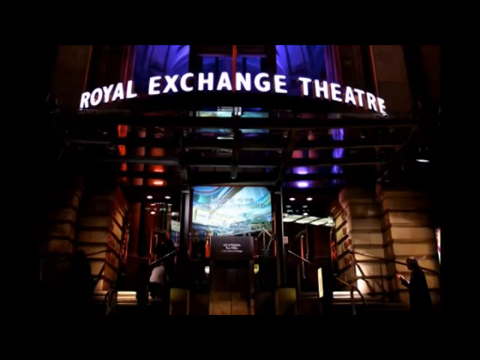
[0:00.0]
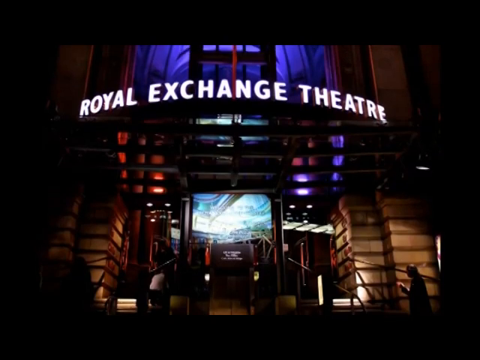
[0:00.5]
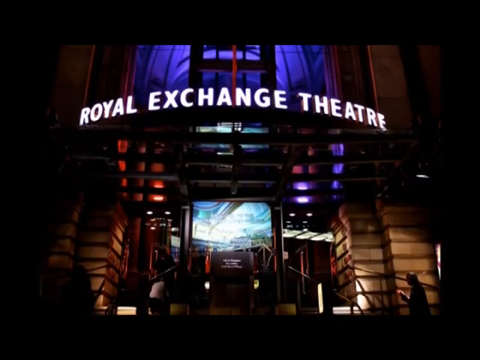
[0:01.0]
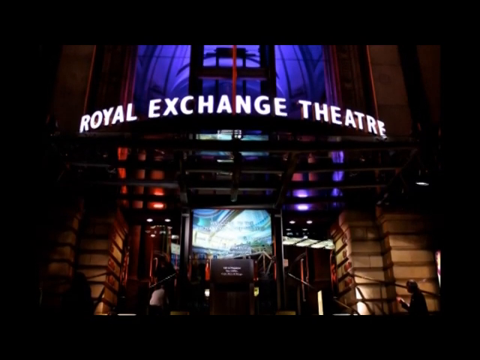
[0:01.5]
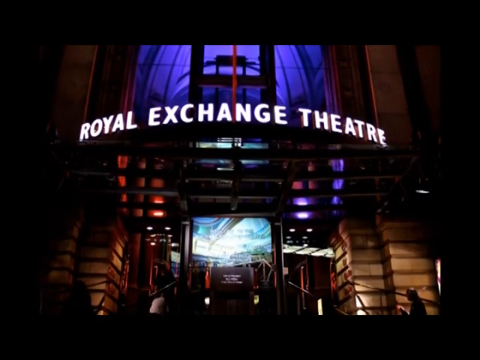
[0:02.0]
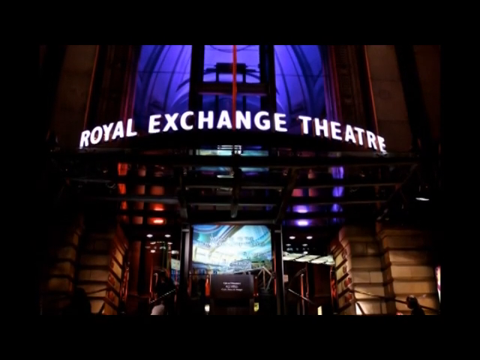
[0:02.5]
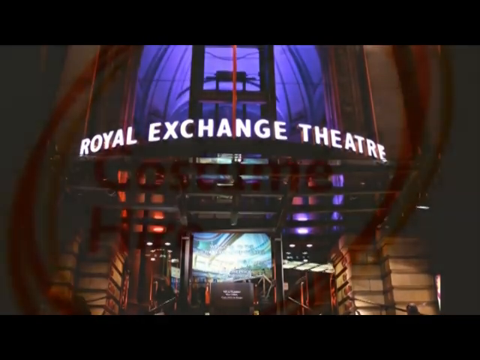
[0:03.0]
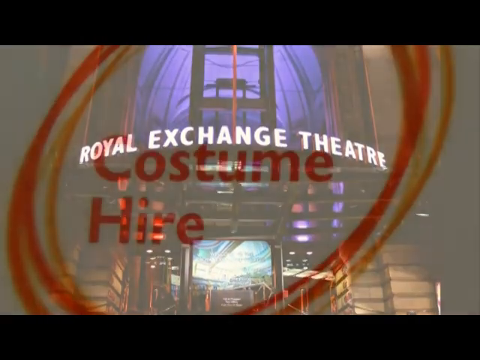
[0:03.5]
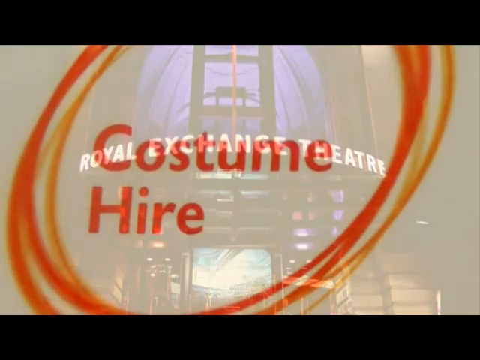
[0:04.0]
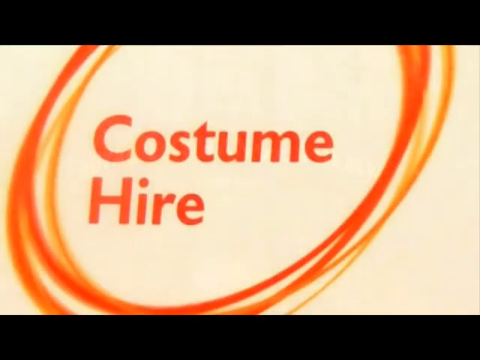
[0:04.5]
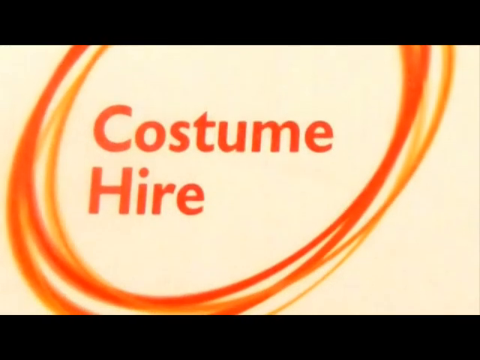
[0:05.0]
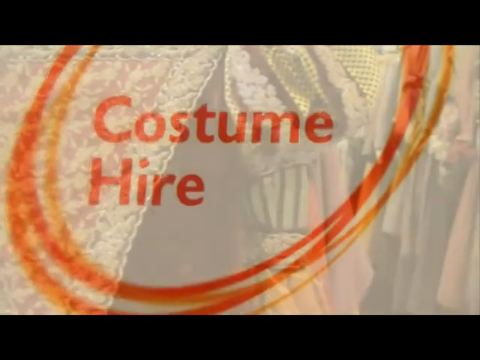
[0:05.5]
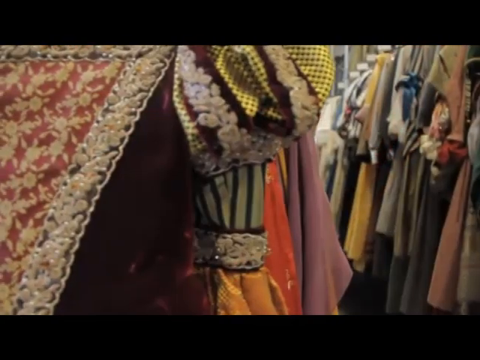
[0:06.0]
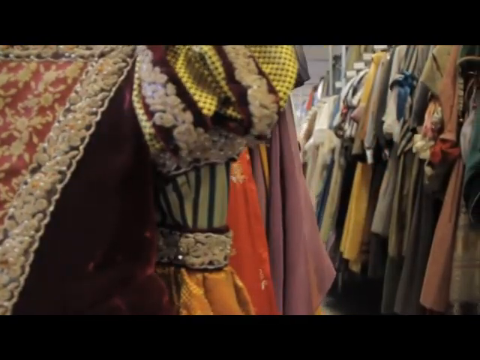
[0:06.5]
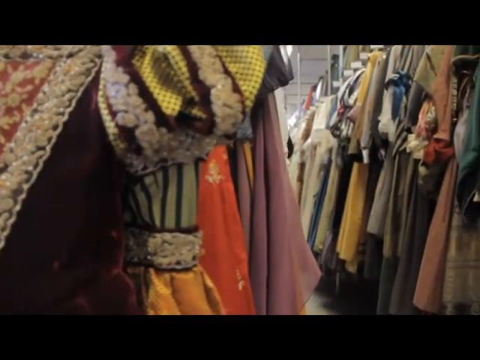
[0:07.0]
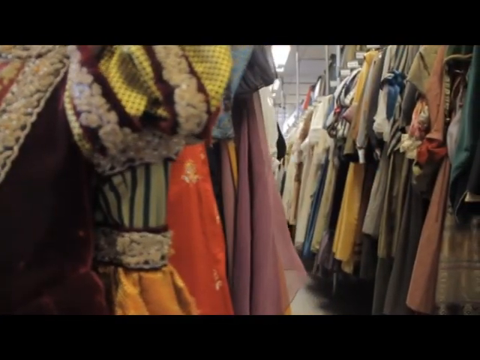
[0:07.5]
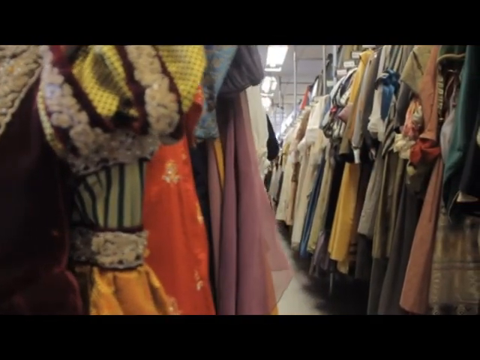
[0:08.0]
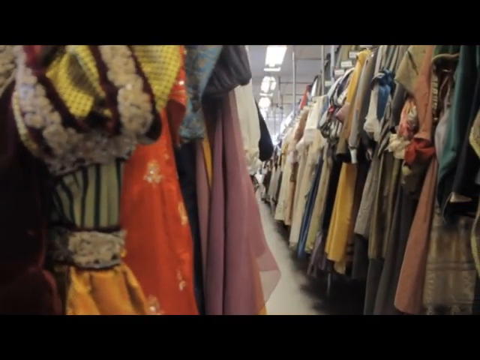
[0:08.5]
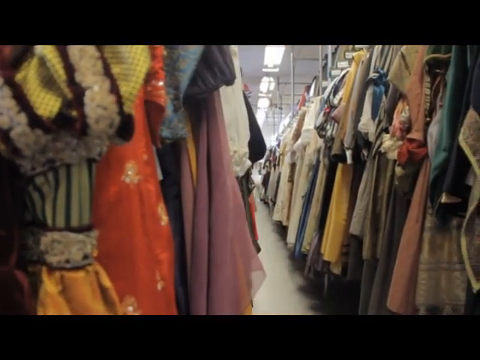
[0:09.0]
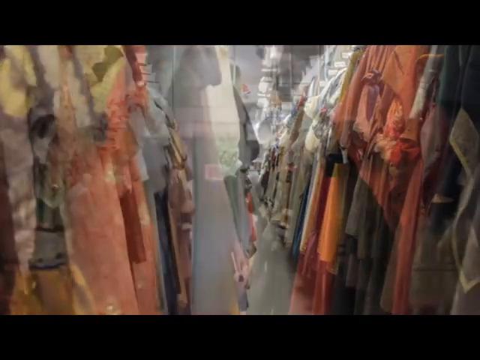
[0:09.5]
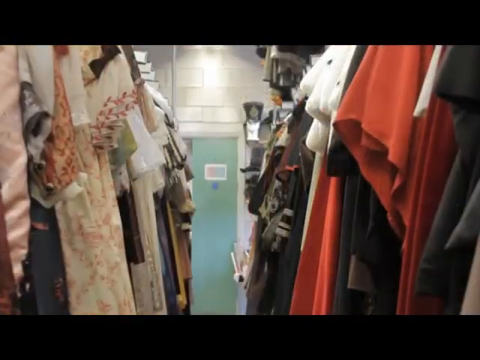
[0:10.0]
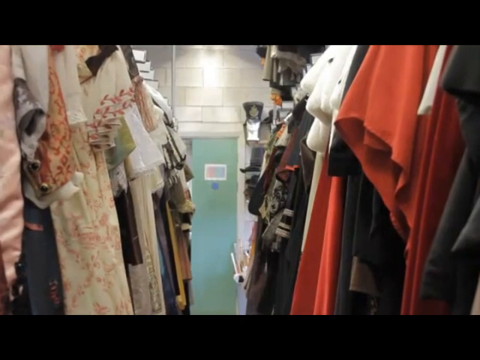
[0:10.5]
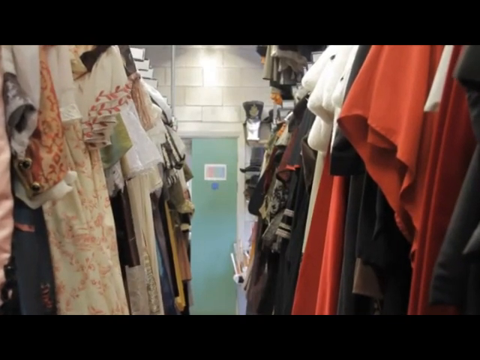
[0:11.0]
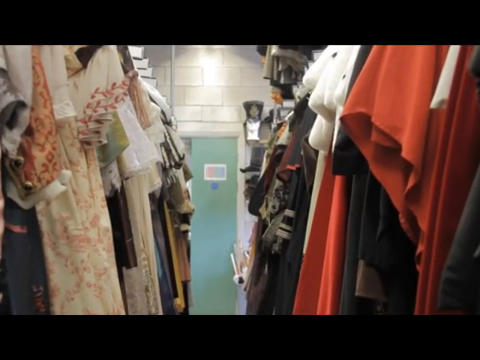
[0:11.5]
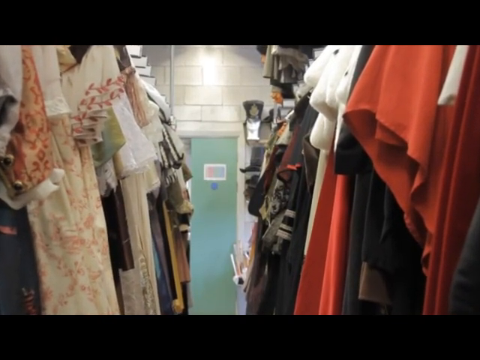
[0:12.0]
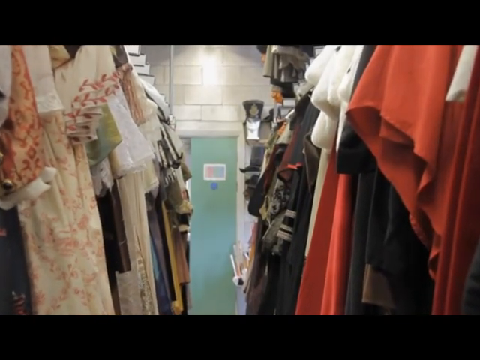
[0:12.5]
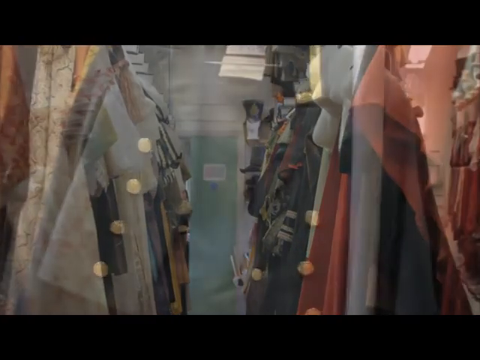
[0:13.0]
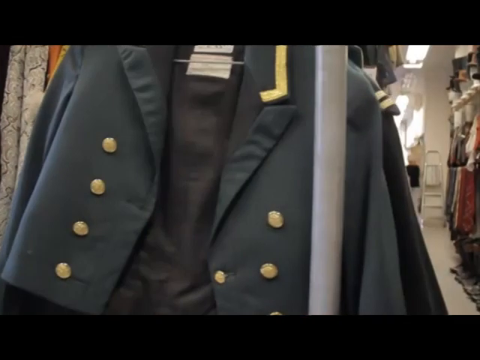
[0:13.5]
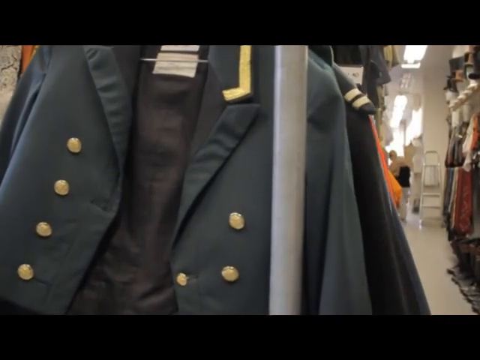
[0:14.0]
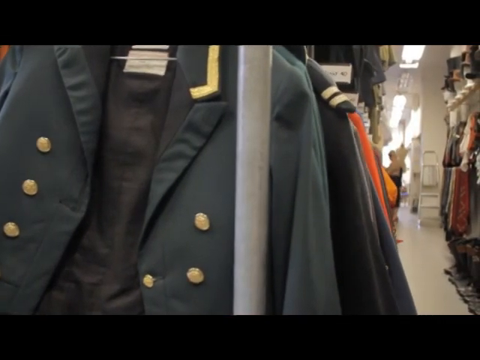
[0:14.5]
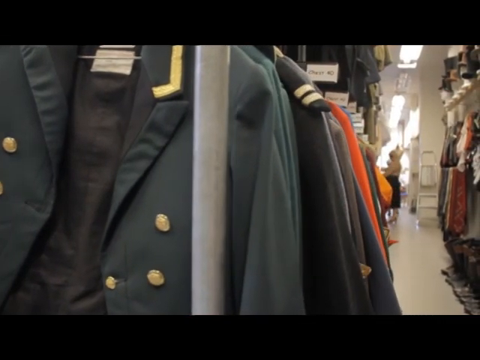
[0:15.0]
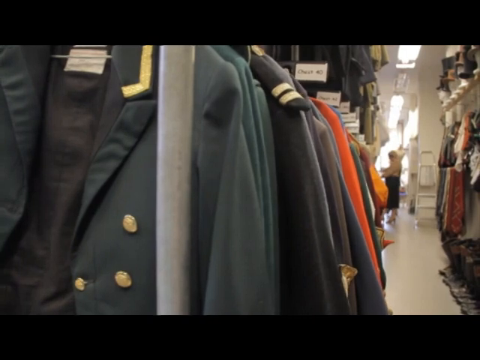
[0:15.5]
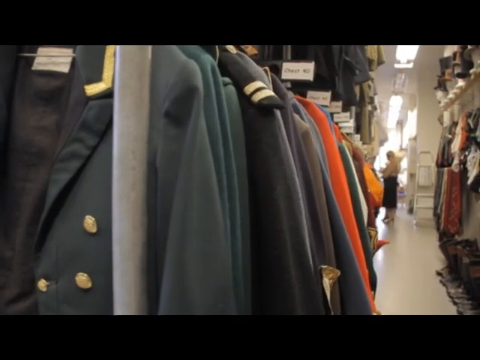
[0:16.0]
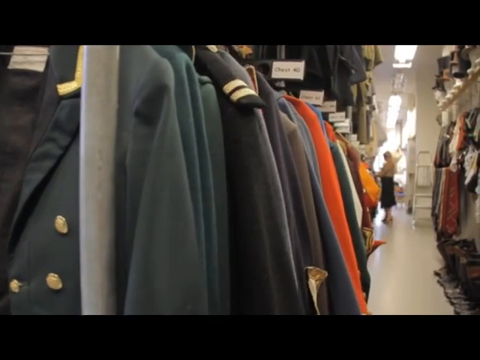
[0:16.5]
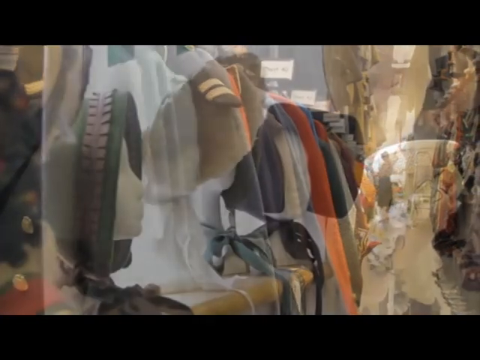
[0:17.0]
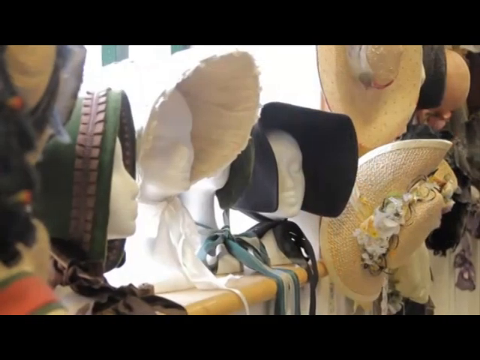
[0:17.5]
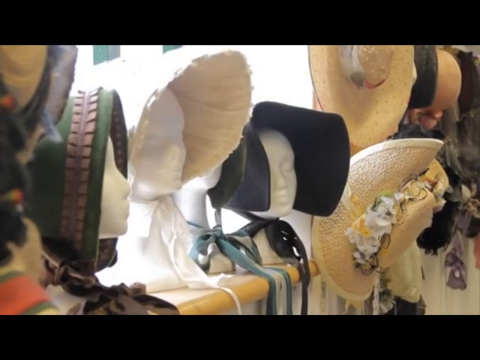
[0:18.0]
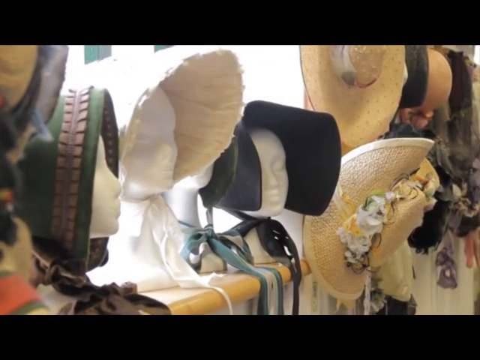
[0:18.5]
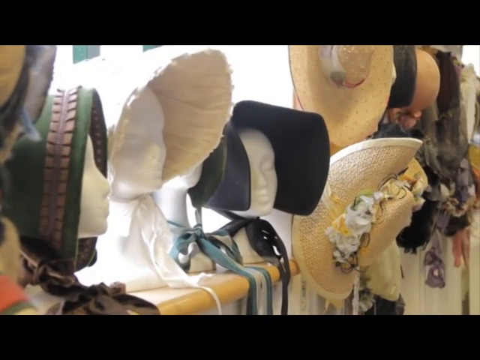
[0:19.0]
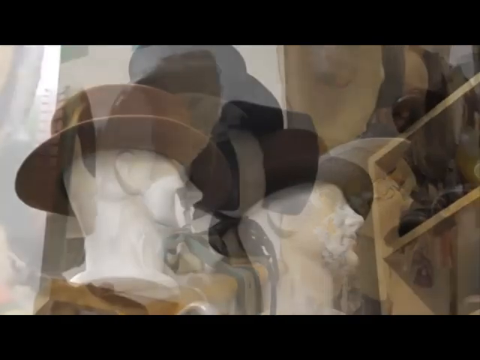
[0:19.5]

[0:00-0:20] The front of the Royal Exchange Theatre is shown as the camera pans up the building. The name Royal Exchange Theatre glows in white, there are lots of interesting lights on the theatre, steps lead up to the doors, and purple lights are at the top. The screen changes to a white background with red typed text reading "costume hire", with red and orange circles around it. The scene then switches to a costume room filled with all sorts of different costumes. The one in front seems to be an old-fashioned dress of some sort, purple with lots of intricate details. The camera pans right to look down a long aisle and moves along it, with hundreds and hundreds of costumes on either side. An old-fashioned jacket with golden-colored buttons is shown, and further down the aisle a person is looking through costumes. The screen then switches to lots and lots of bonnets and hats on mannequin heads.